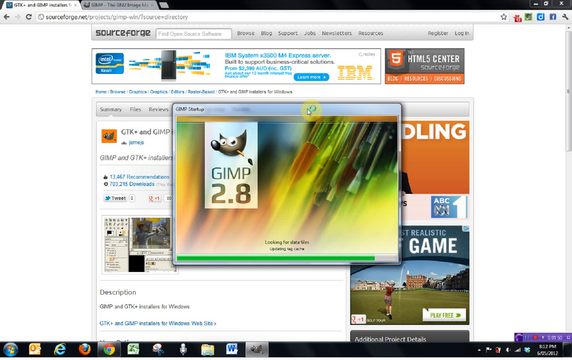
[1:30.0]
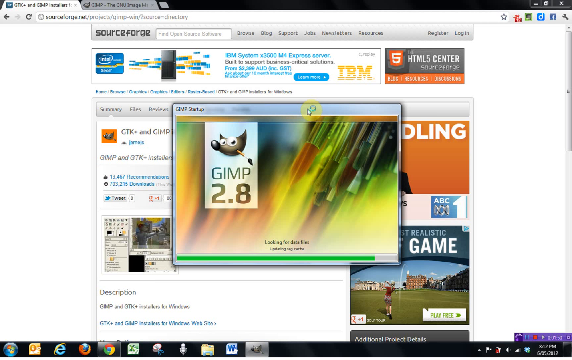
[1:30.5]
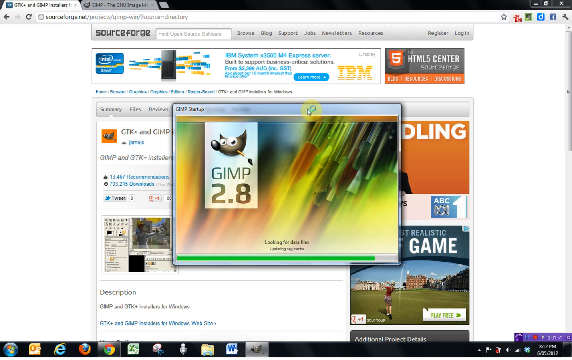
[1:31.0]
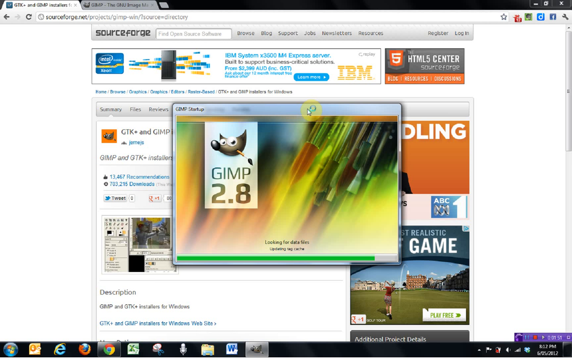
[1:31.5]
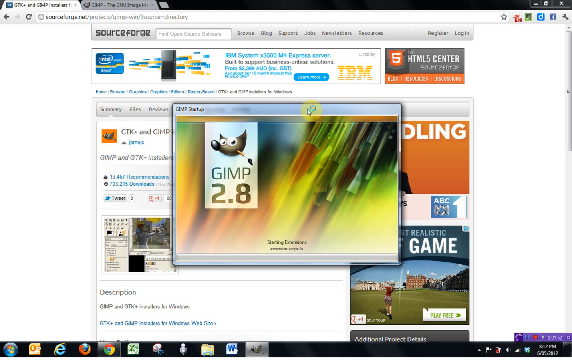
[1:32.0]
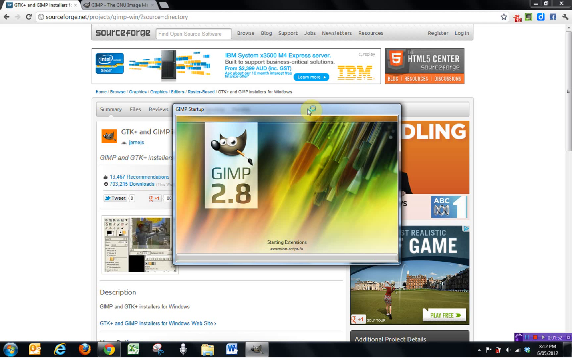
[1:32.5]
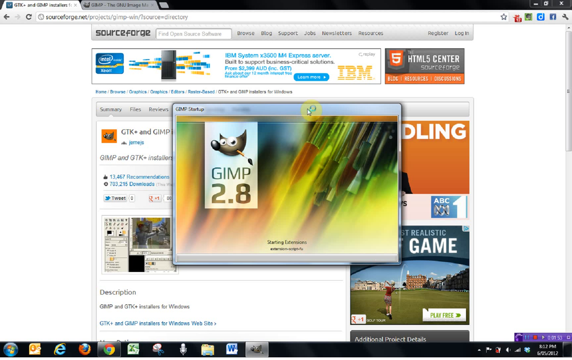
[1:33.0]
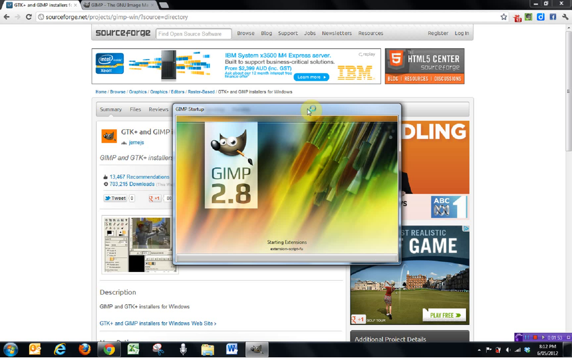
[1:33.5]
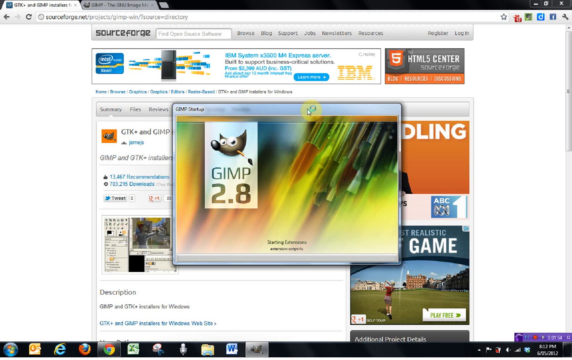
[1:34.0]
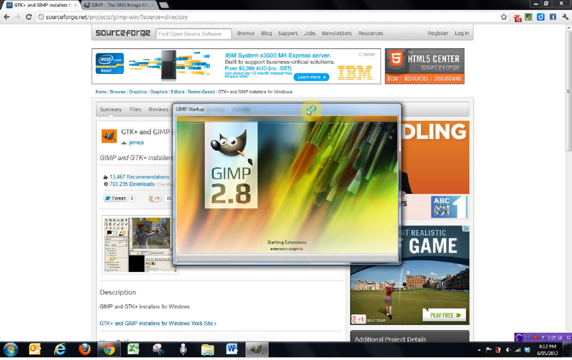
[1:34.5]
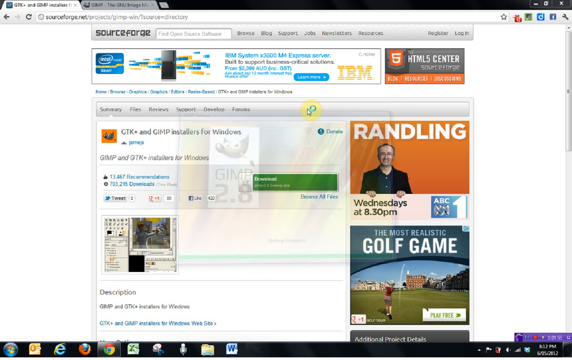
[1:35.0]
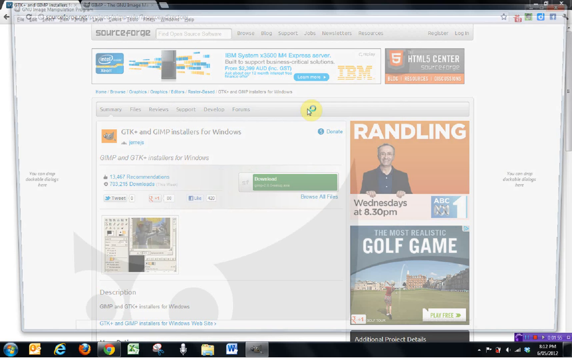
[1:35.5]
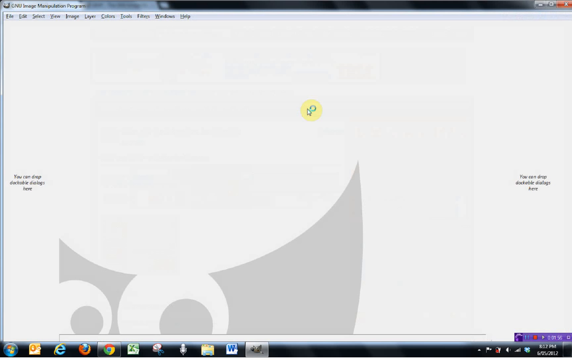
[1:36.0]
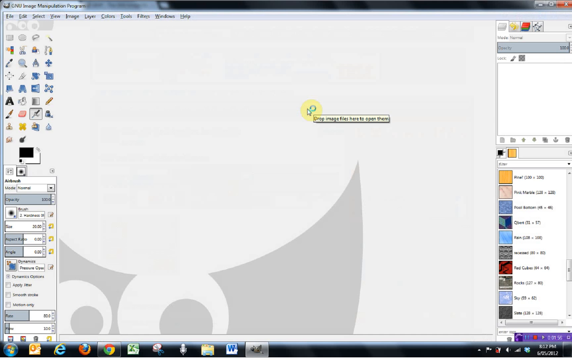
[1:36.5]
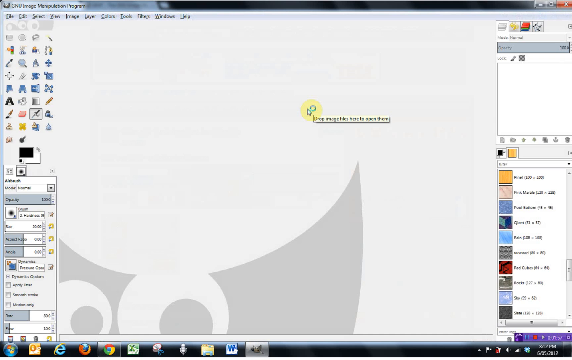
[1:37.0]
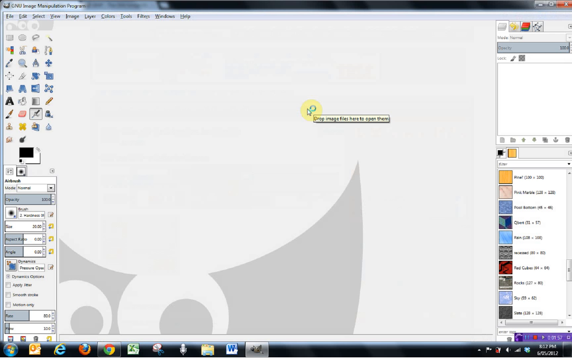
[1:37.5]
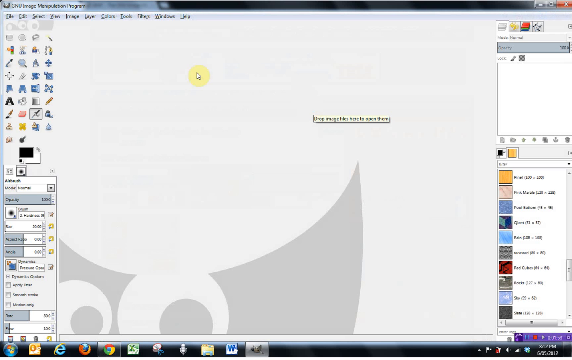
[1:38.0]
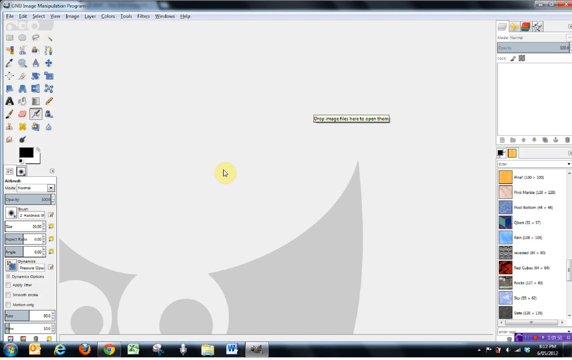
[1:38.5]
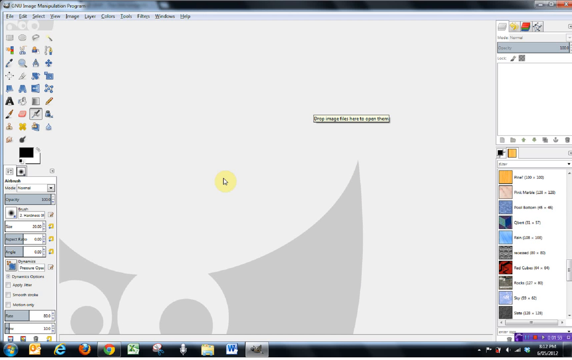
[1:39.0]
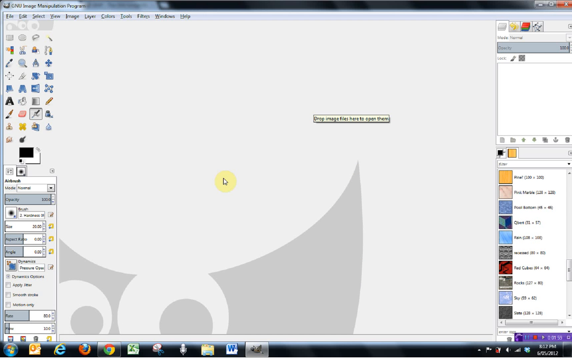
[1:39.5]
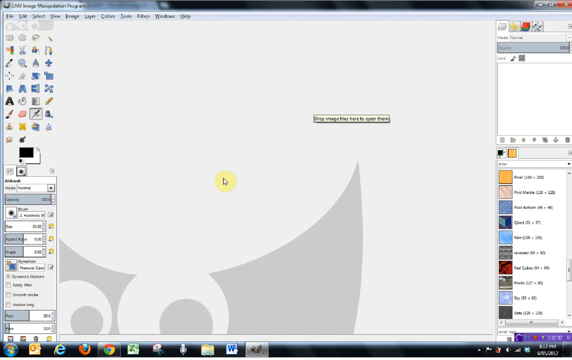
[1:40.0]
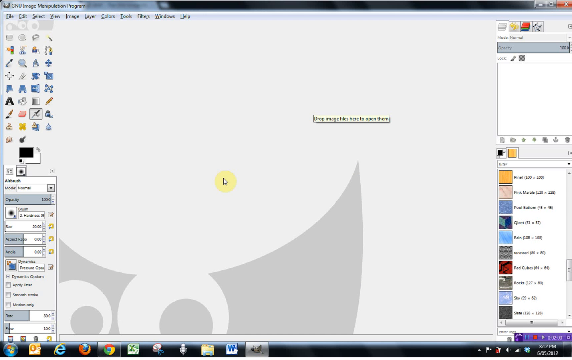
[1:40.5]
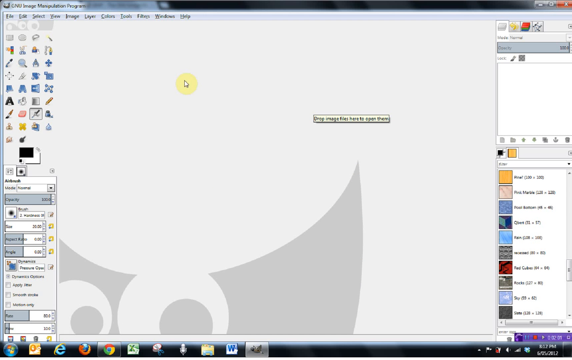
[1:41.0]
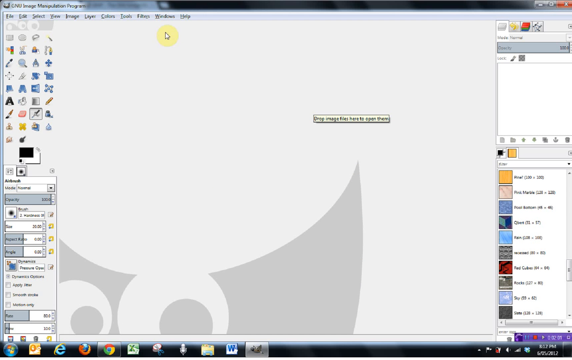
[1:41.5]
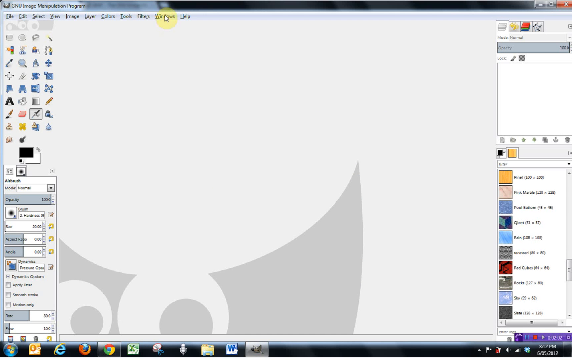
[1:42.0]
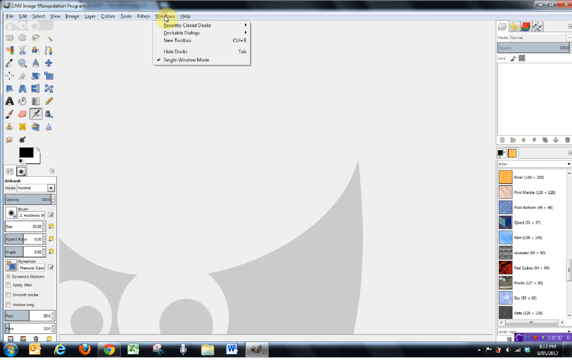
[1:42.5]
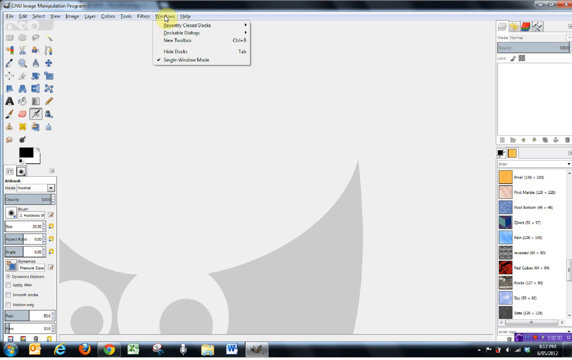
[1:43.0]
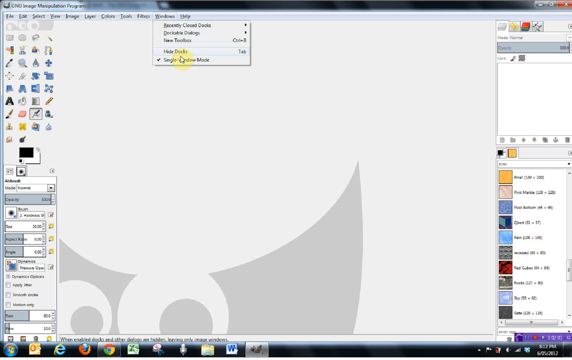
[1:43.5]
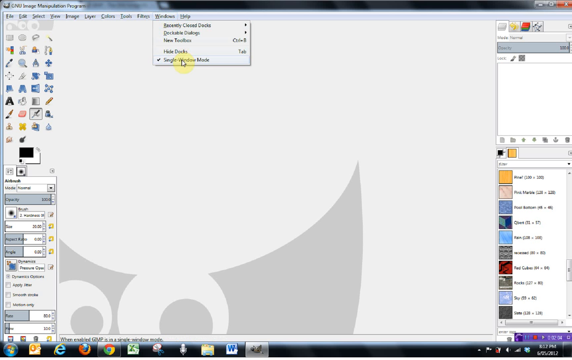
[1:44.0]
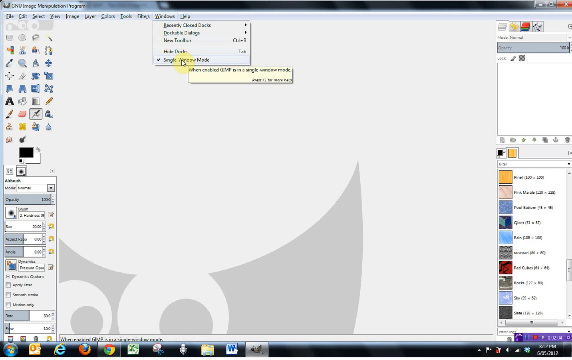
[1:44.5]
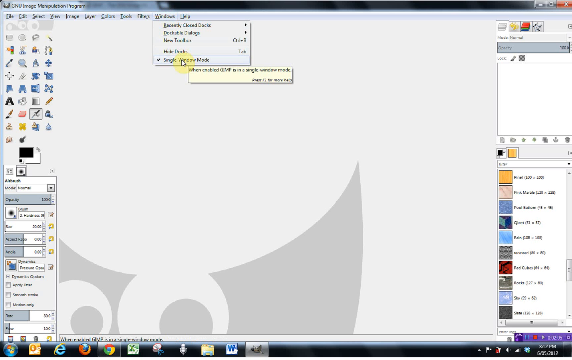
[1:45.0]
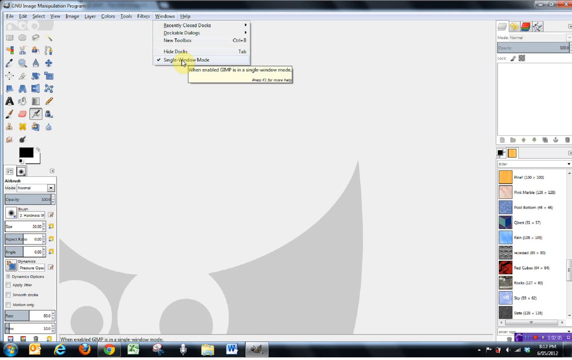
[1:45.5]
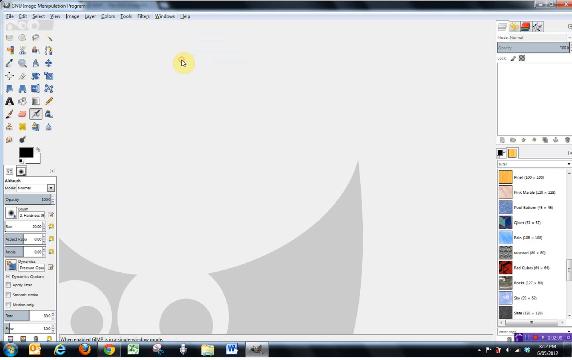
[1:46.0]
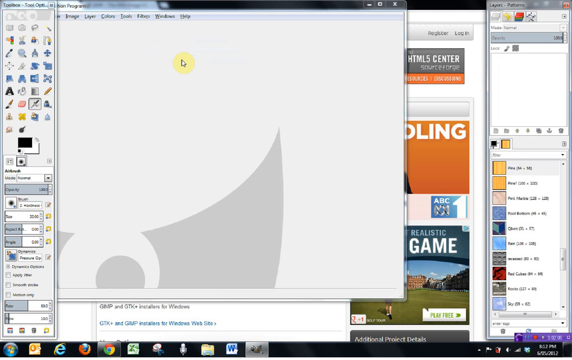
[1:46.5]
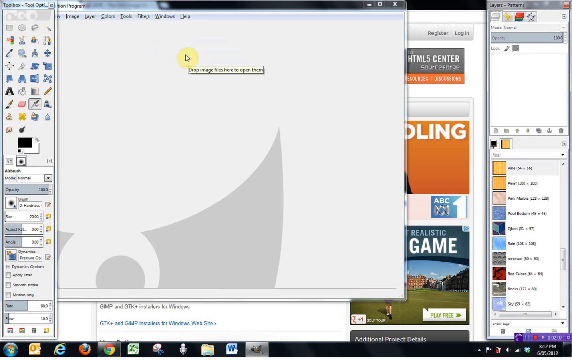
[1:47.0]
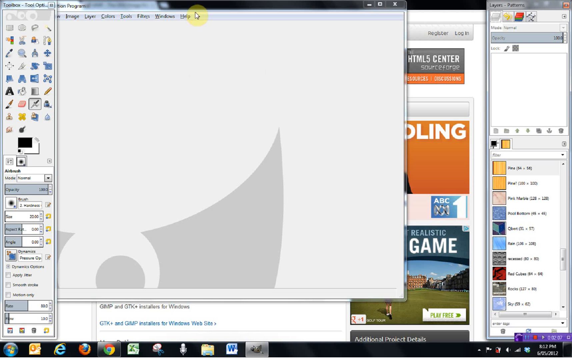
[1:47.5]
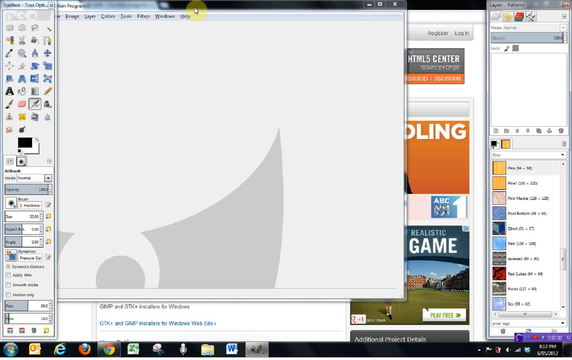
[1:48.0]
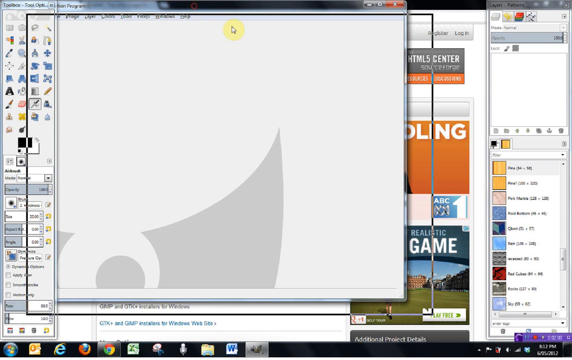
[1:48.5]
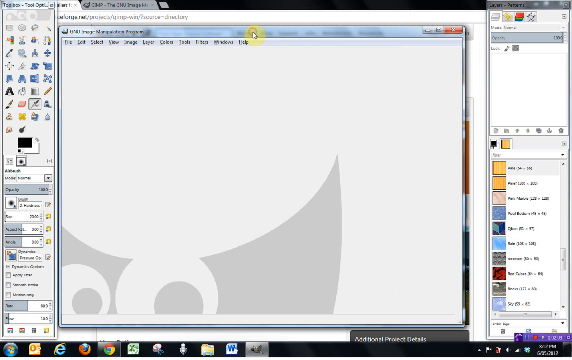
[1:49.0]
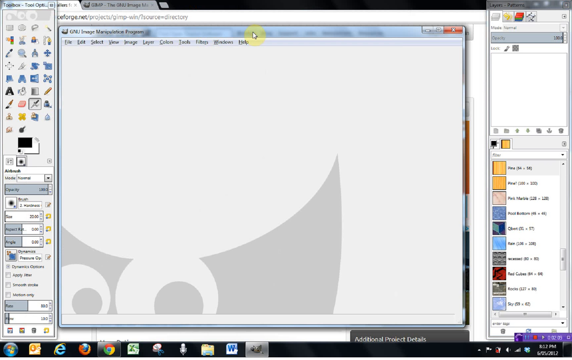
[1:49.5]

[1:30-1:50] The shot starts on the GIMP 2.8 icon, which is apparently double-clicked; the program seems to have already been installed. The program opens with a layout that looks like a basic image editing tool, though things are a little blurry: there are a bunch of icons in the upper left corner and what look almost like layers at the bottom right, somewhat reminiscent of Photoshop. The cursor goes up to the Windows menu and selects what is probably "single window mode", though the text is very blurry even at full screen. A window then pops off by itself, no longer connected to everything else.